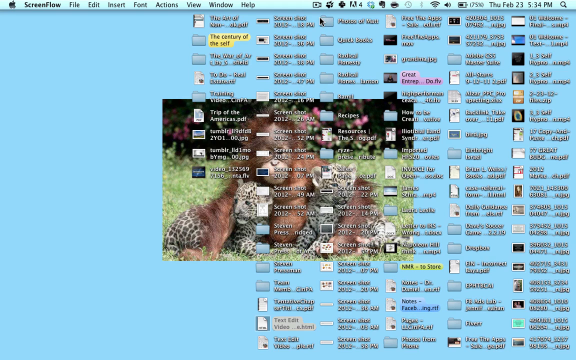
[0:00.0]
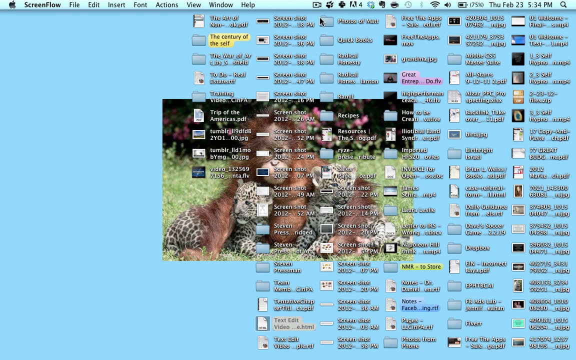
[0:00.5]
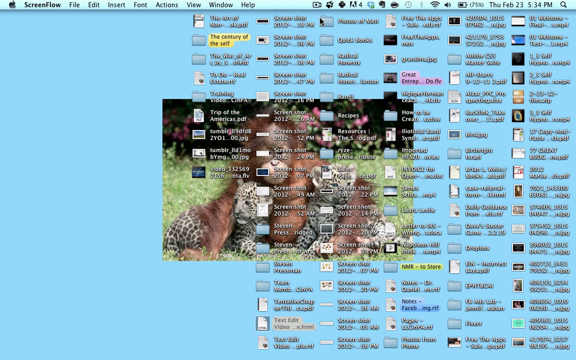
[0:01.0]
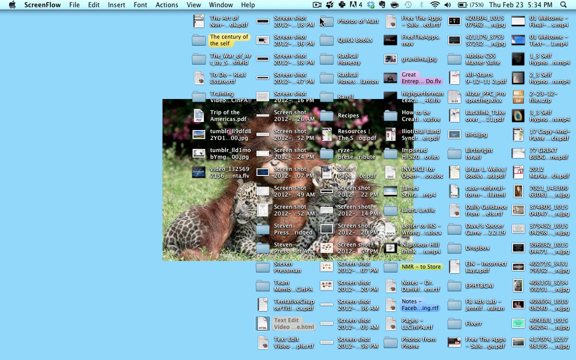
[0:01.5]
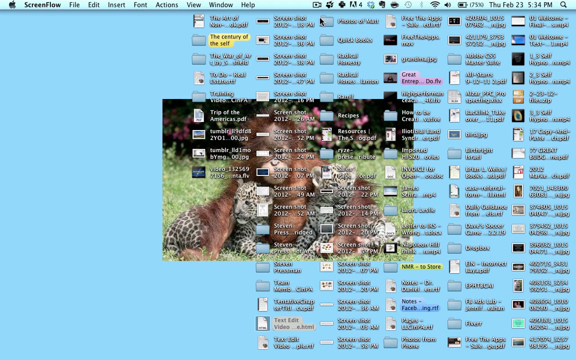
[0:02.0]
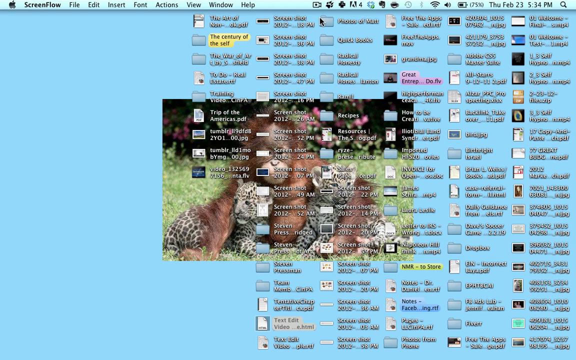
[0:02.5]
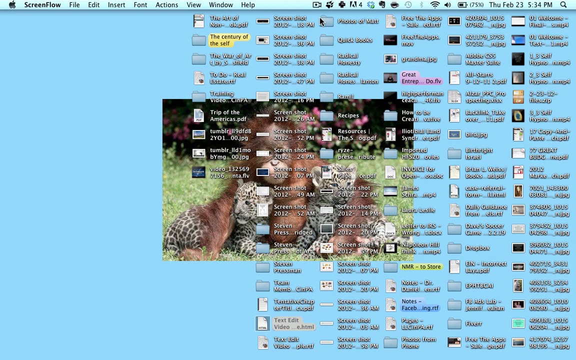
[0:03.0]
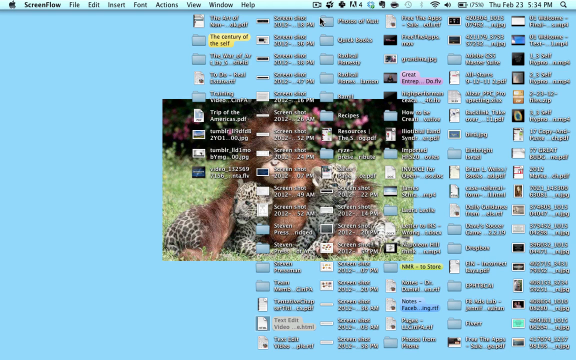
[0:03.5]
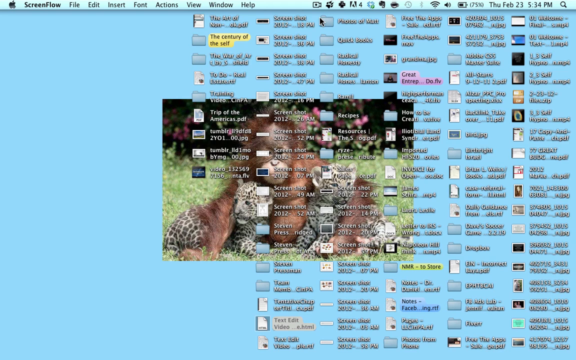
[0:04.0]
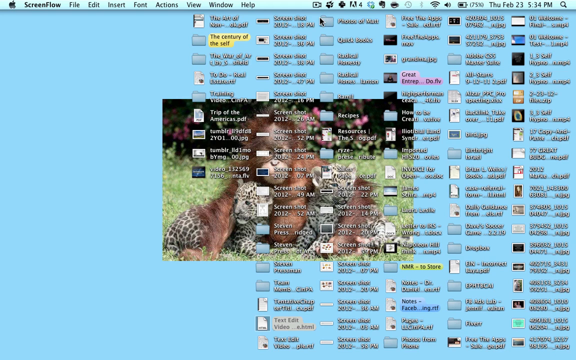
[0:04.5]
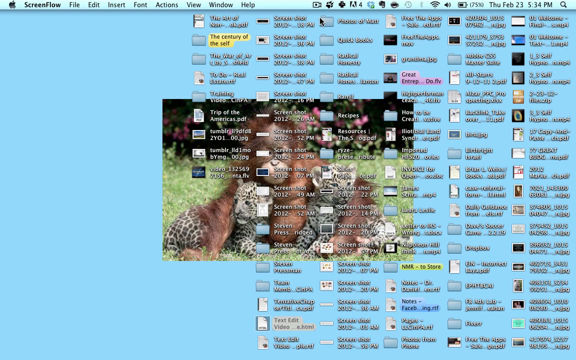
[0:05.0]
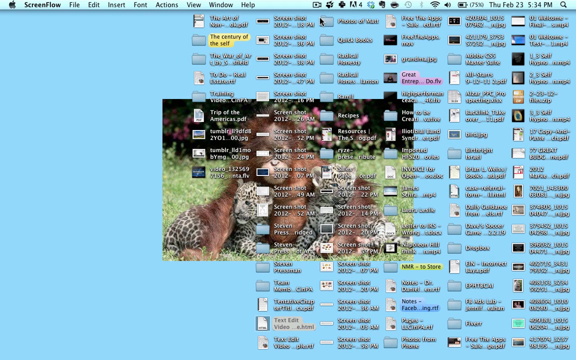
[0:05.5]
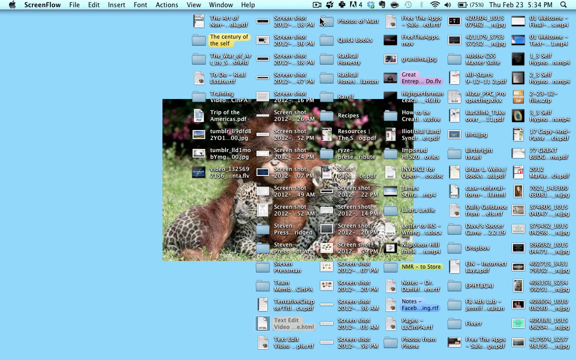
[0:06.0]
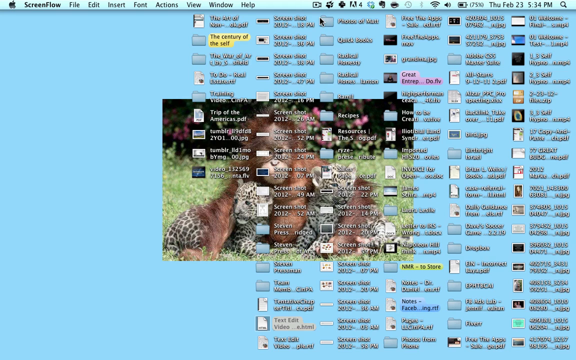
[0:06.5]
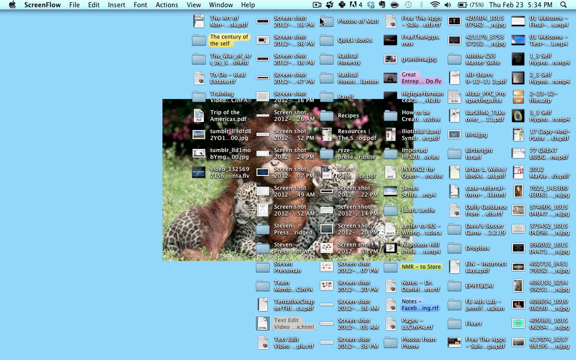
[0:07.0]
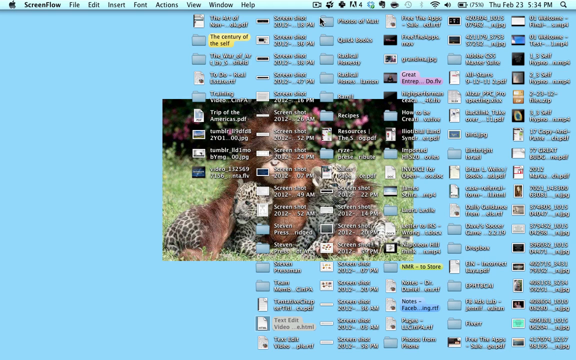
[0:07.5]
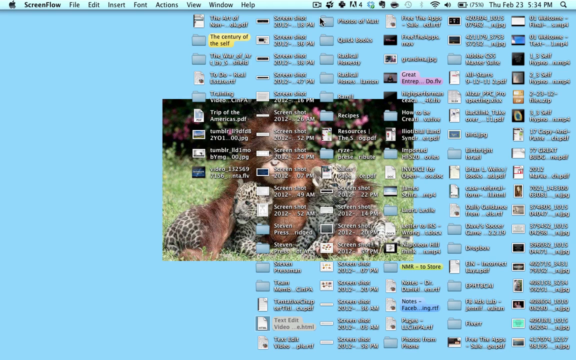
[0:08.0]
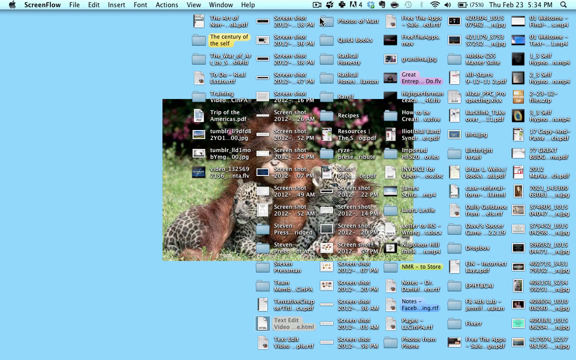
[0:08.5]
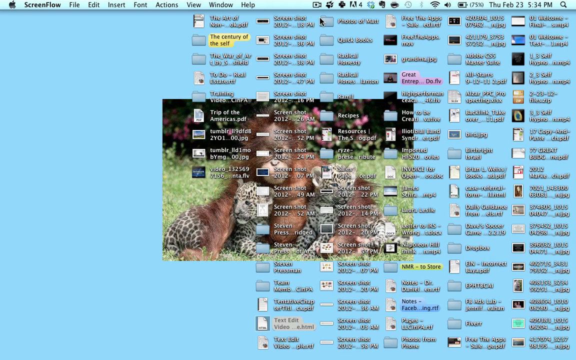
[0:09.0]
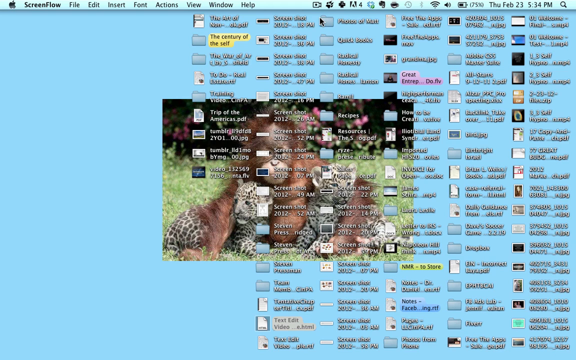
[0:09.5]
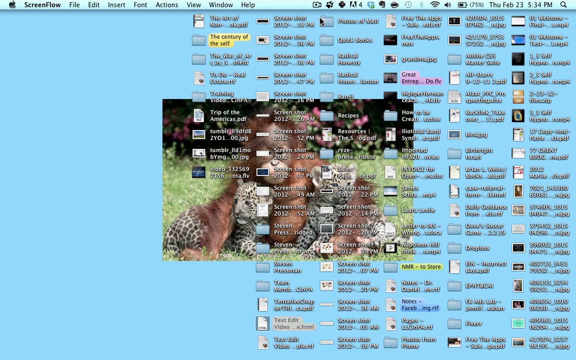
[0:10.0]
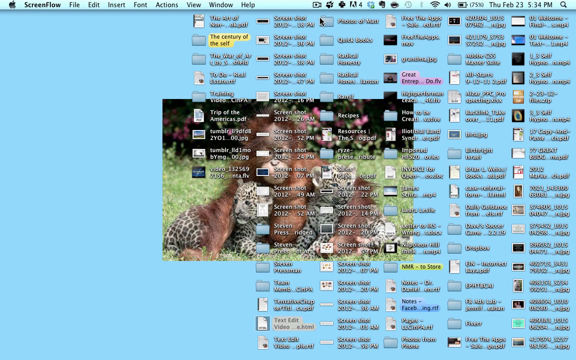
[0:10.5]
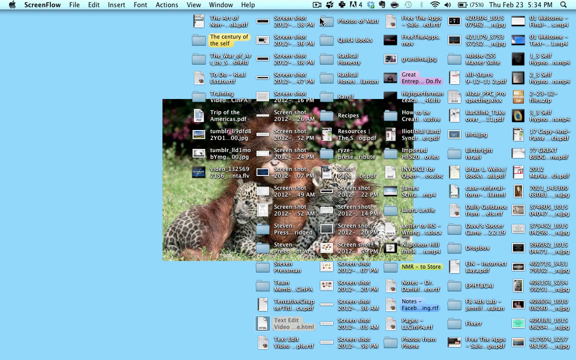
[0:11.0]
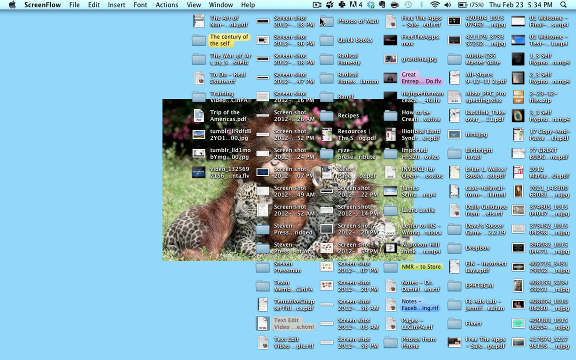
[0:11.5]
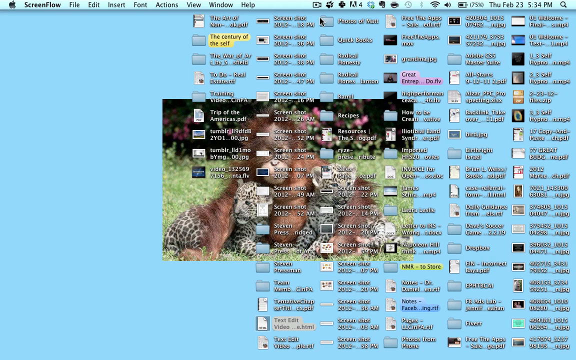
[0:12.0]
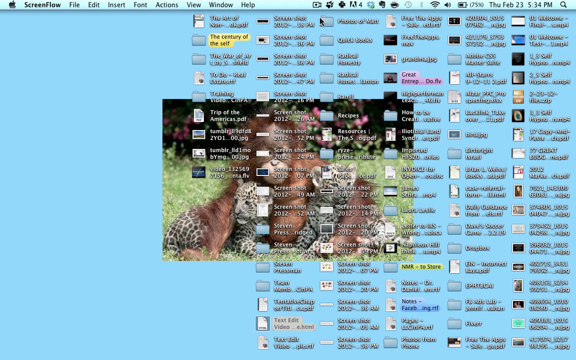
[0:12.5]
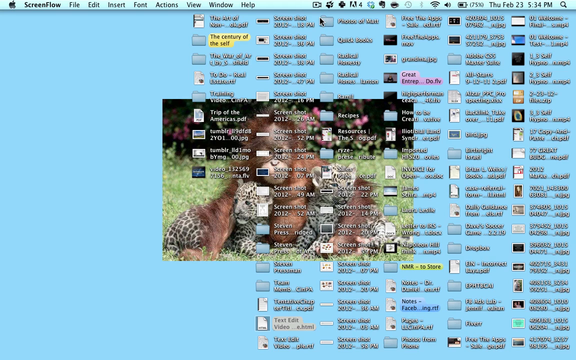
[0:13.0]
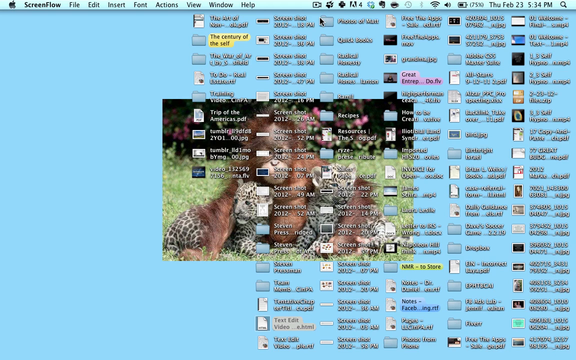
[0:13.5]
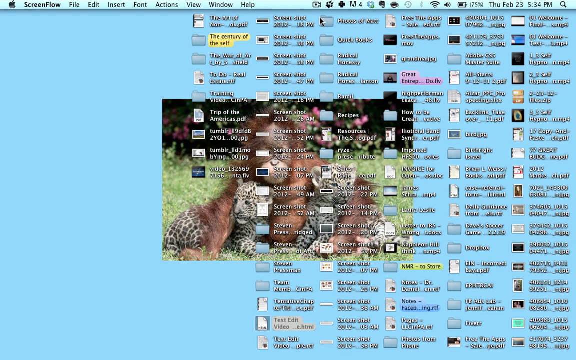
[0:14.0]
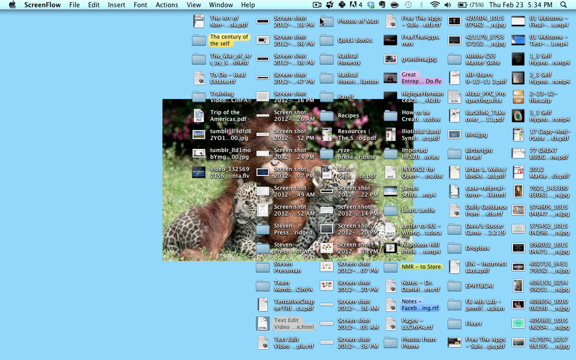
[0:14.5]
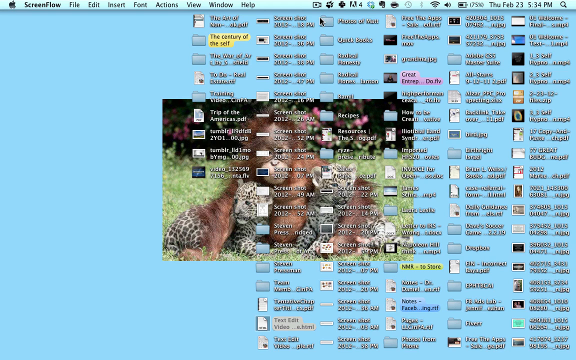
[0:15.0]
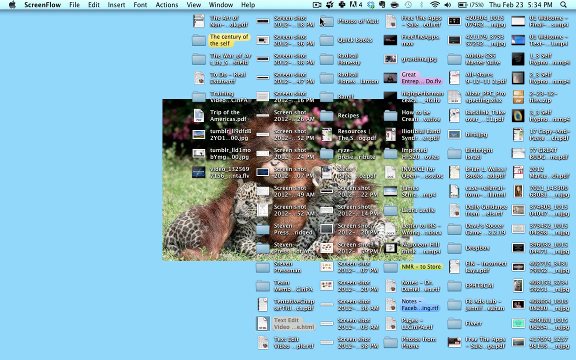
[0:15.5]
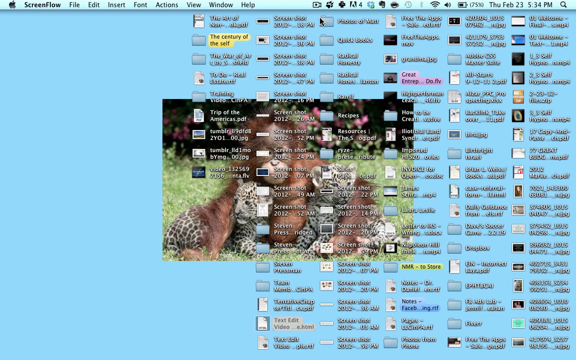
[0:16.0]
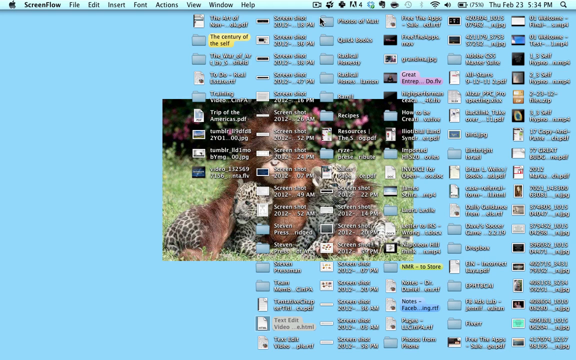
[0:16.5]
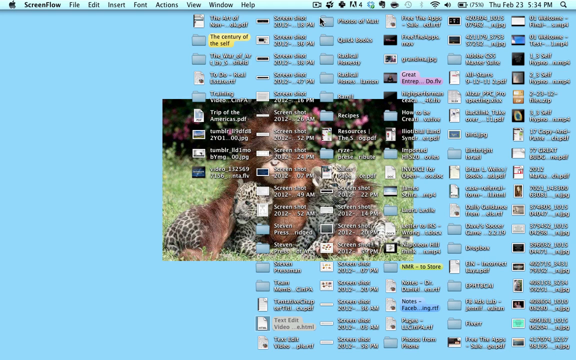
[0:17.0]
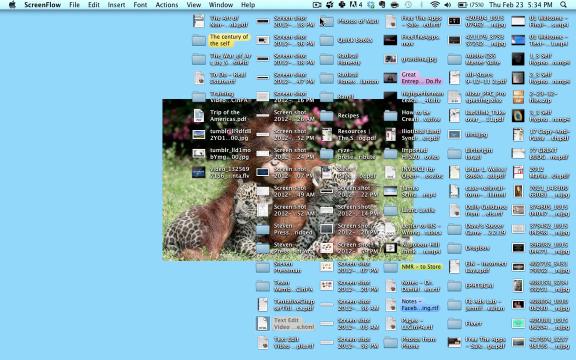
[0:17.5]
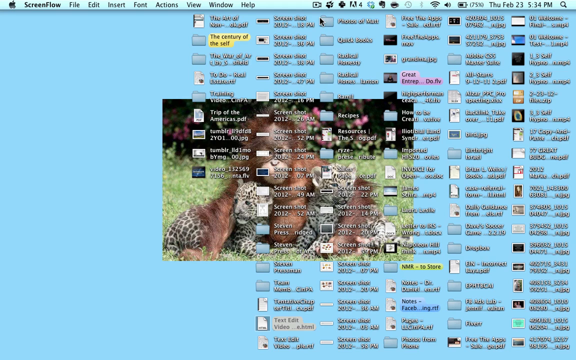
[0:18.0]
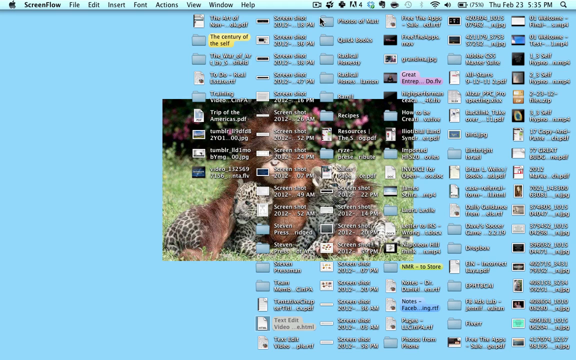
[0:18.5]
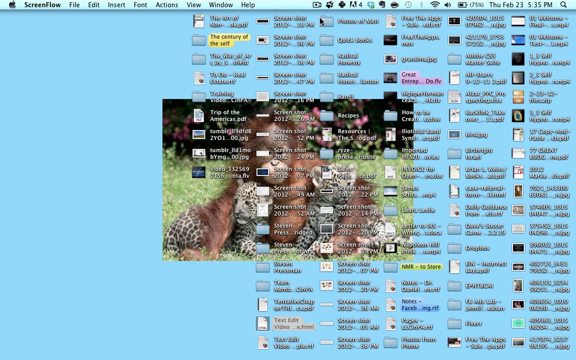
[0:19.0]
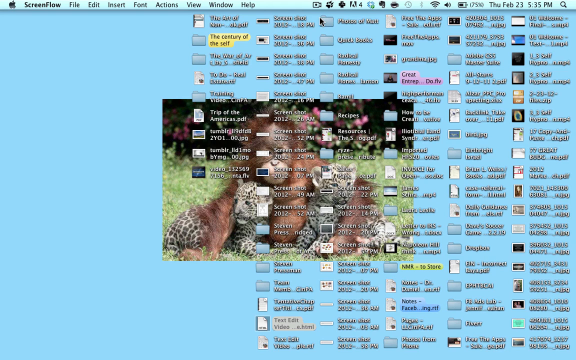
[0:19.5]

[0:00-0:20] The scene is an Apple iOS desktop whose wallpaper is a small image of a baby orangutan in a garden. The orangutan is sitting on the ground and holds a baby leopard in each arm, underneath its arm, with each leopard resting on all fours. The backdrop behind the picture is sky blue. On top of the desktop is a grid of 104 icons with their names: the first 64 icons are in a 6x8 grid formation and the remaining 40 are in a 5x8 grid formation. The cursor remains hovered above a folder in the grid. On the top row, three icons in, is a blue folder with the words "photos of Matt" to the right of it. The screen stays this way for the whole segment.